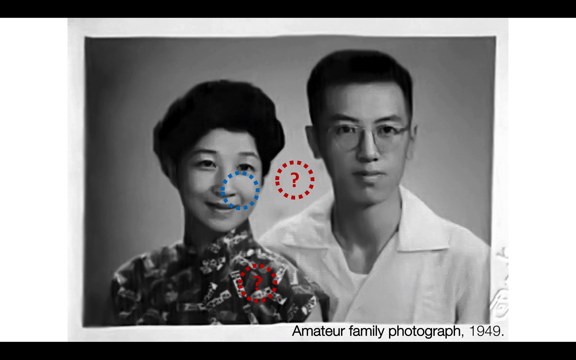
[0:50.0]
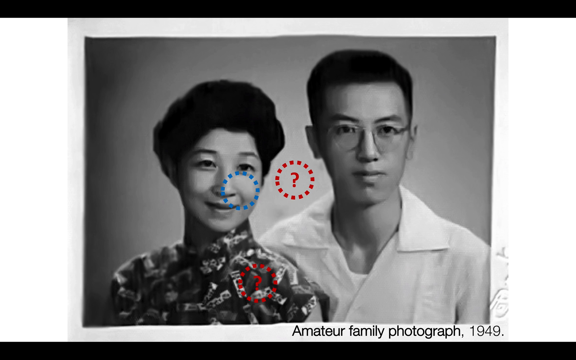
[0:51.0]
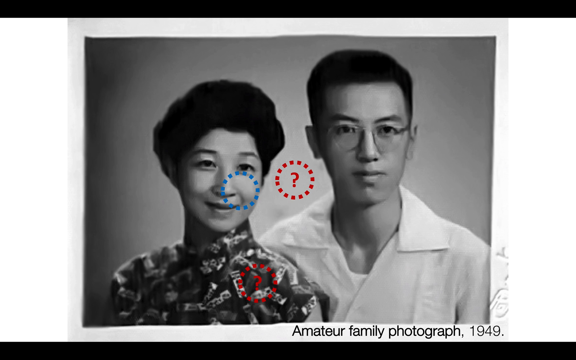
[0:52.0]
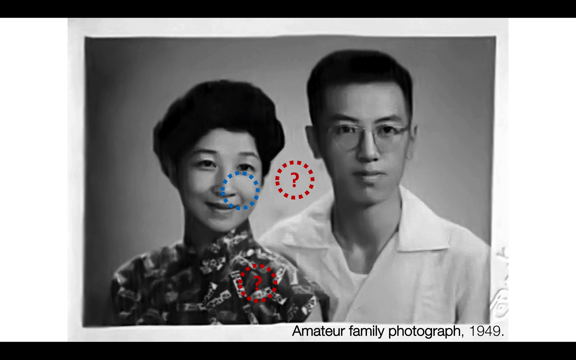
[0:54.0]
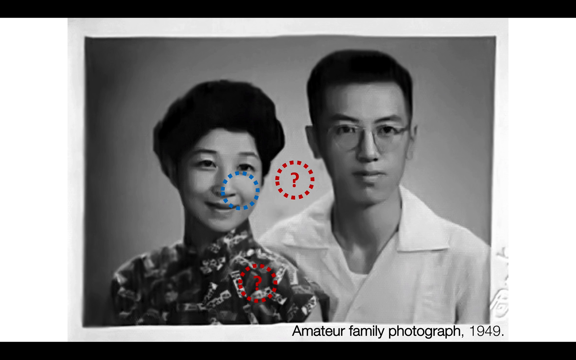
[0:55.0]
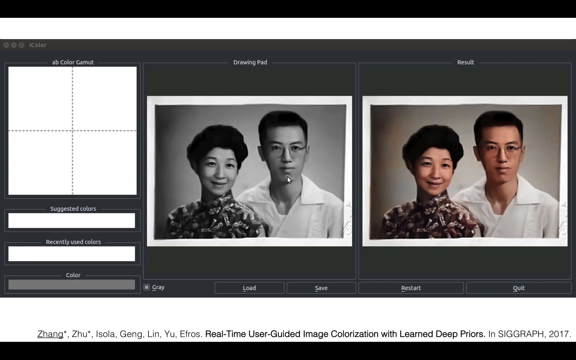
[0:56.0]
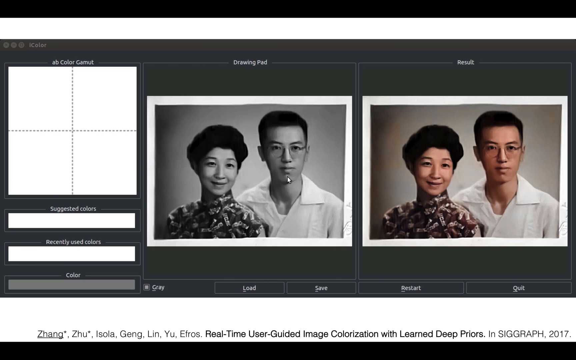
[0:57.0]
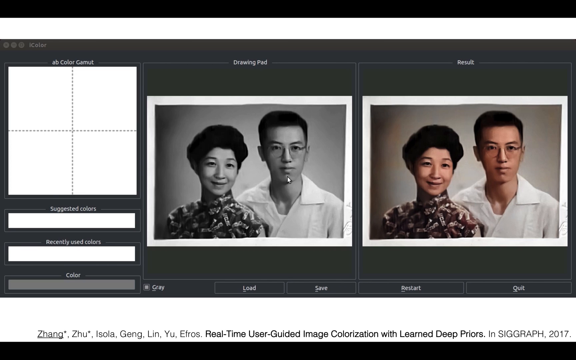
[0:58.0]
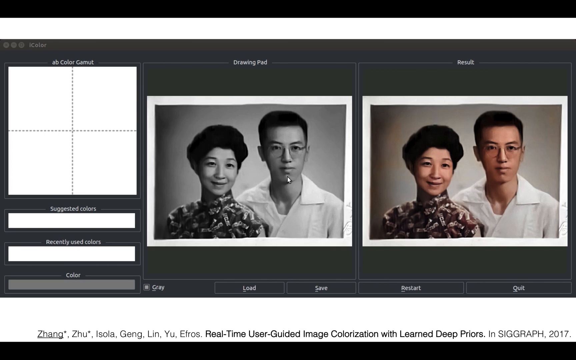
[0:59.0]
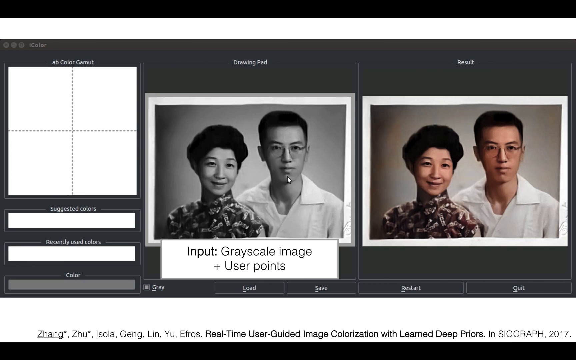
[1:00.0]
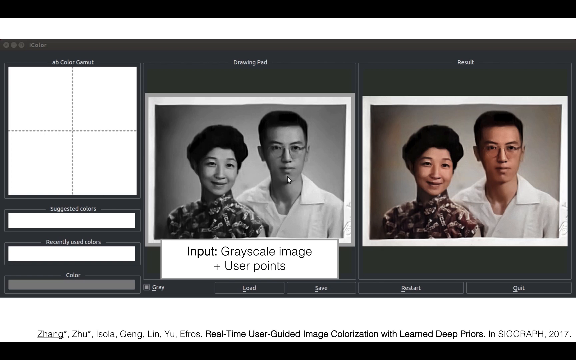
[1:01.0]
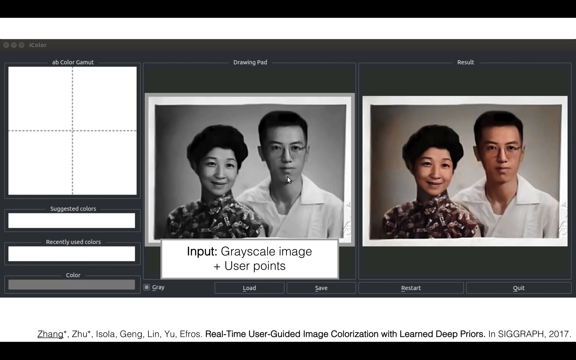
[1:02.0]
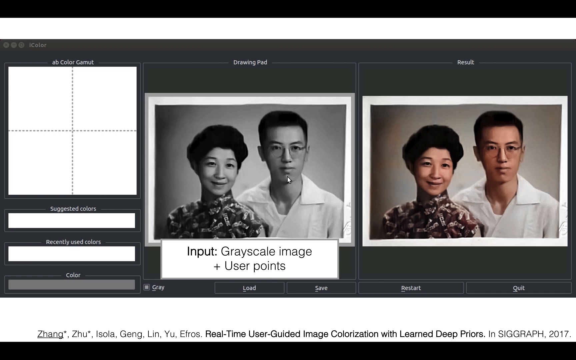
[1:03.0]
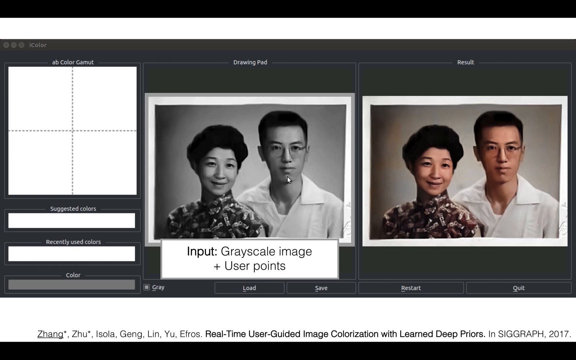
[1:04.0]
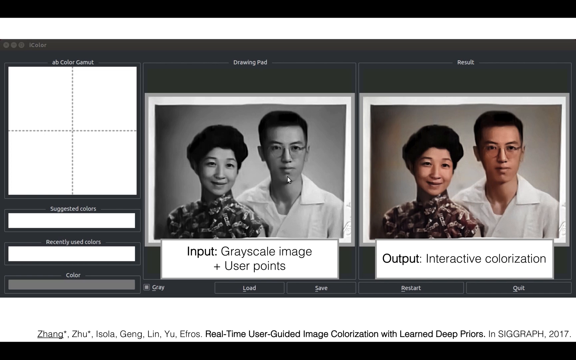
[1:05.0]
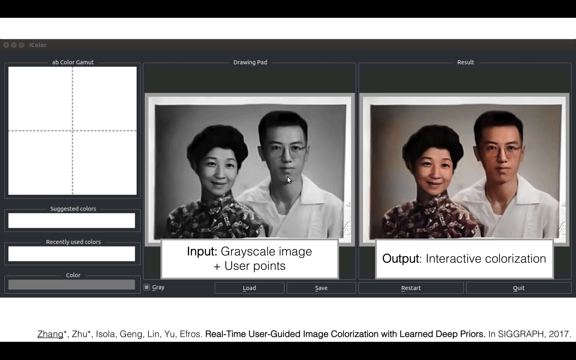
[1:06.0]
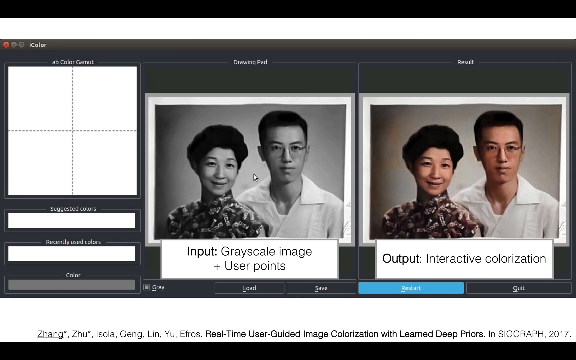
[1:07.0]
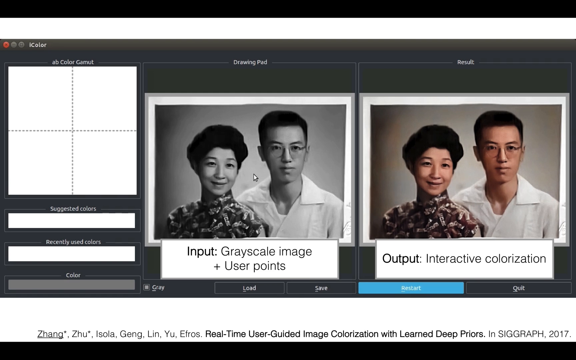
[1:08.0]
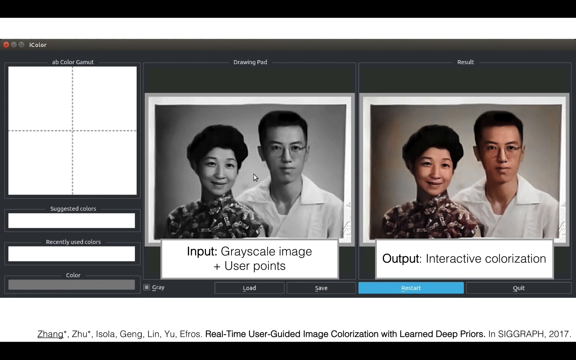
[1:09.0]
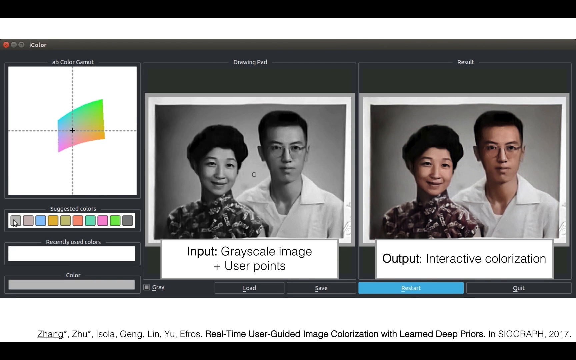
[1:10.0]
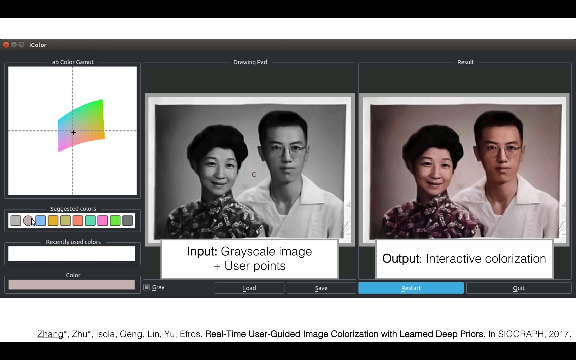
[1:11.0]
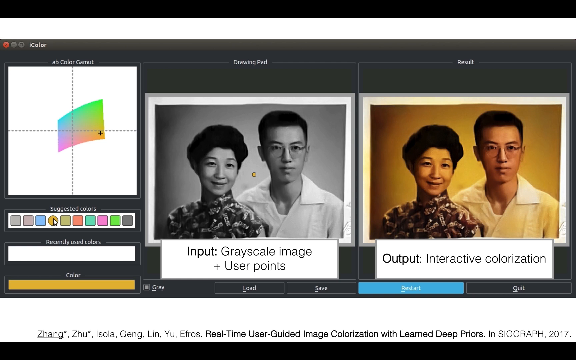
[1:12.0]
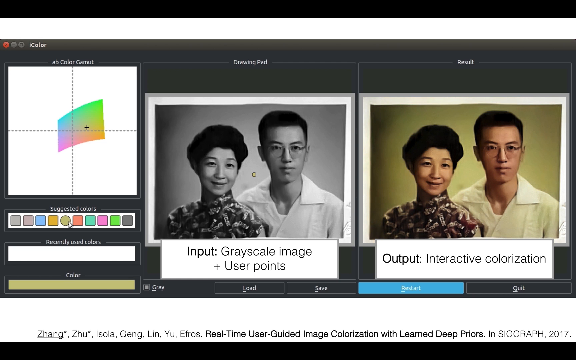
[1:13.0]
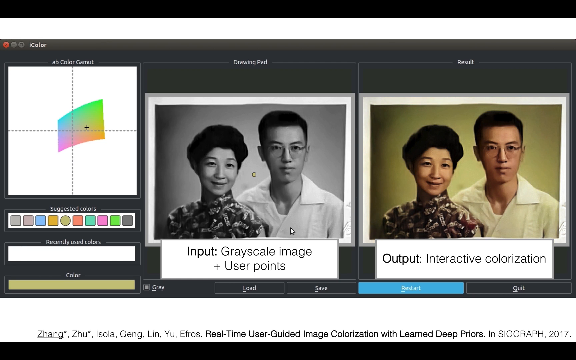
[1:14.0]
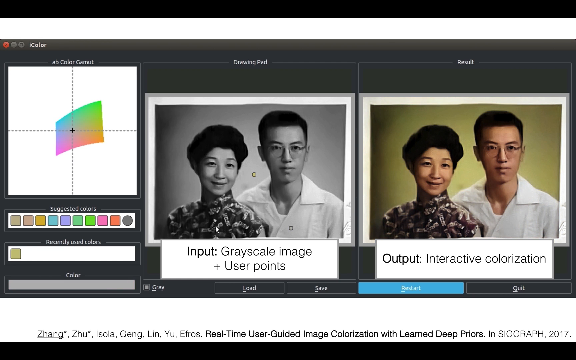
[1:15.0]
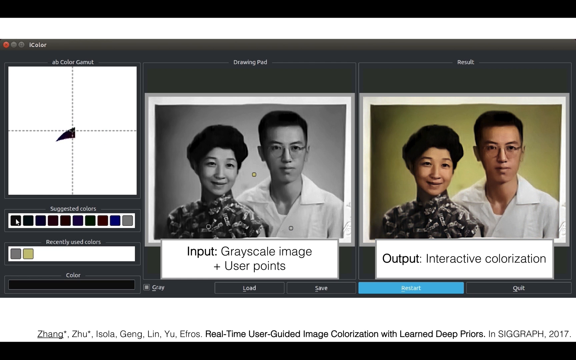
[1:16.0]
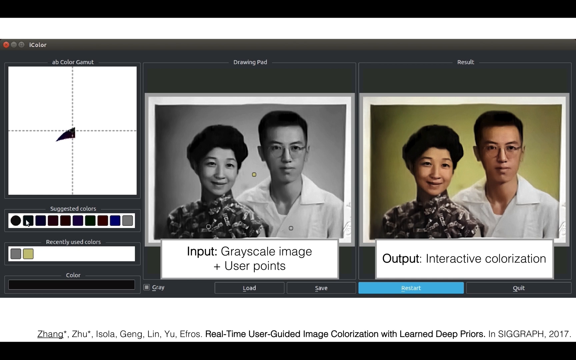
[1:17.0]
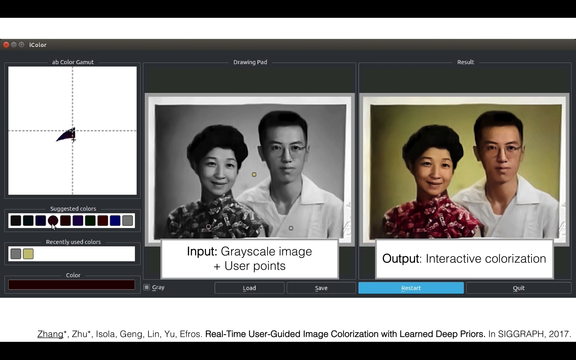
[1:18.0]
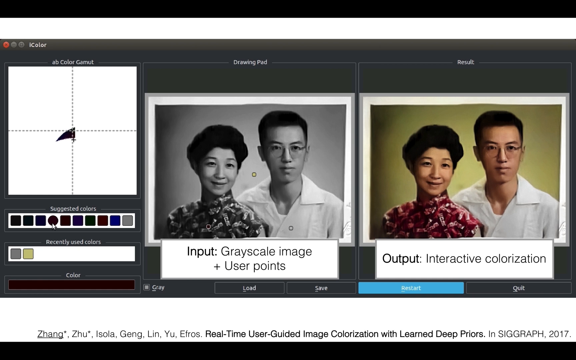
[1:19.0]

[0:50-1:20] The image of the young man and woman, both of Asian descent, remains, with the man on the right and the woman on the left. The man is clean-shaven with no beard, wears glasses, has short black hair, and has on a white t-shirt with a white inner shirt. The woman has medium-length black hair going vertically up and wears a sort of multi-colored shirt, kind of a black-and-white mix. Three circles are on the image: a blue one on the woman's left cheek, and two red ones, one between the man and the woman and one on the left side of the woman's chest. Each red circle contains a red question mark, and all the circles are made of tiny squares with spaces in between. The camera focuses on this image for a while, with "amateur family photograph" at the bottom right. The scene then changes to a black-and-white photo in the middle with the words "drawing pad" above it, and on the right a colored image of the same two people with the word "result" above it. On the left is a white square box labeled "AB color gamut." Beneath the black-and-white photo is the text "input grayscale image plus user points," and underneath the colored photo appears "output interactive colorization." It looks like some type of software. On the far left, a menu pop-up reads "suggested colors" and contains square boxes of different colors and shapes. After the person clicks on a square box, it turns into a circle.